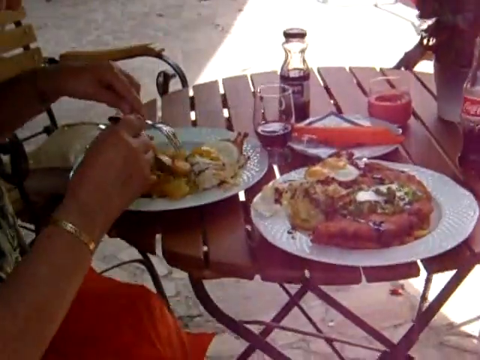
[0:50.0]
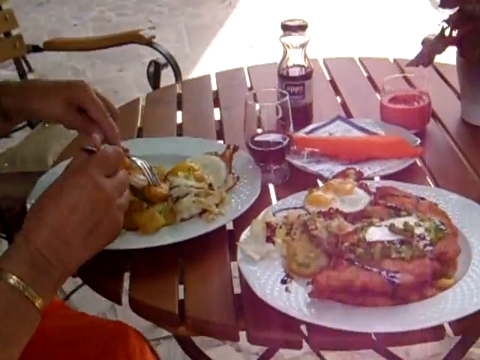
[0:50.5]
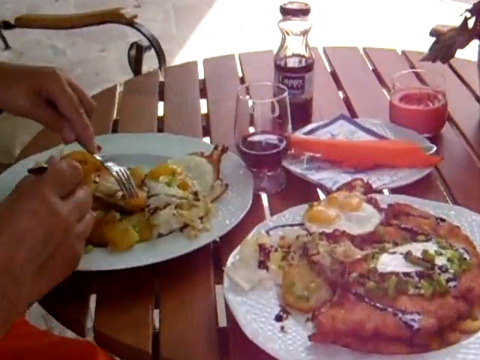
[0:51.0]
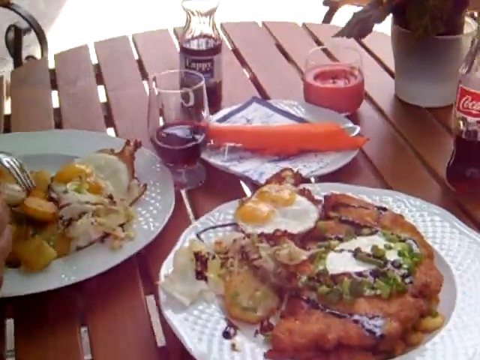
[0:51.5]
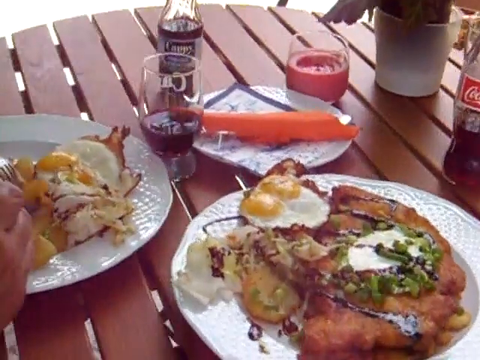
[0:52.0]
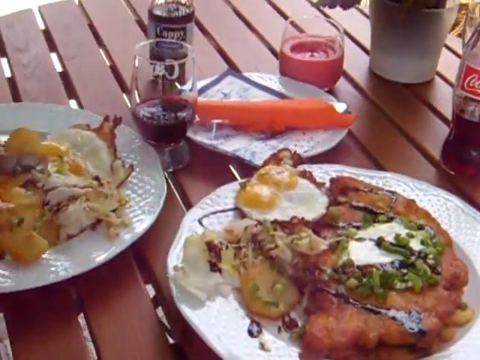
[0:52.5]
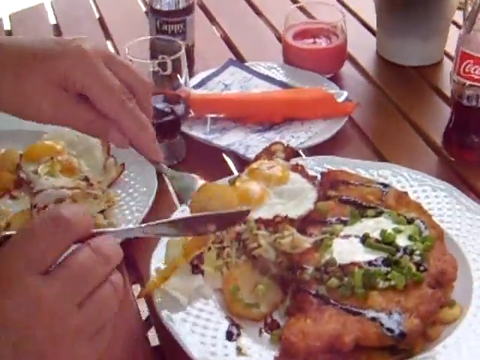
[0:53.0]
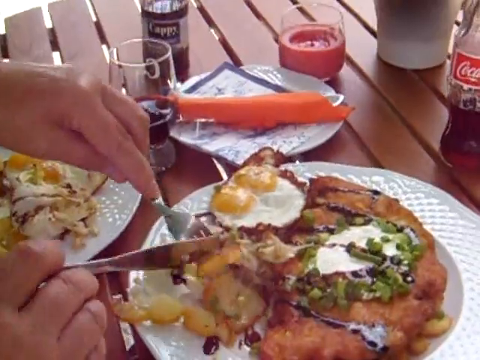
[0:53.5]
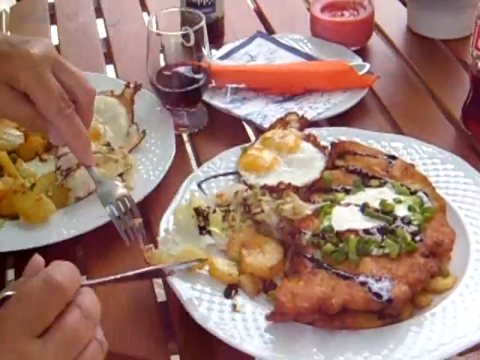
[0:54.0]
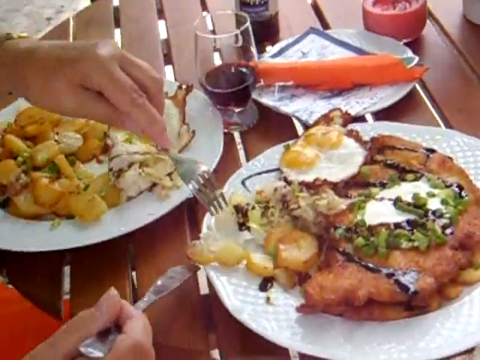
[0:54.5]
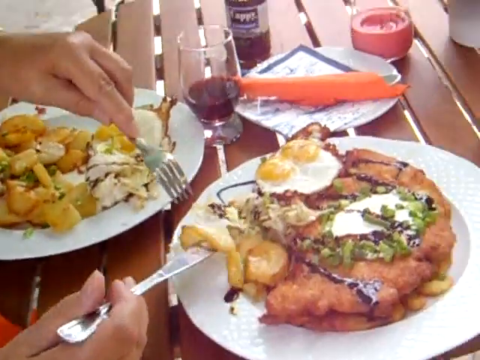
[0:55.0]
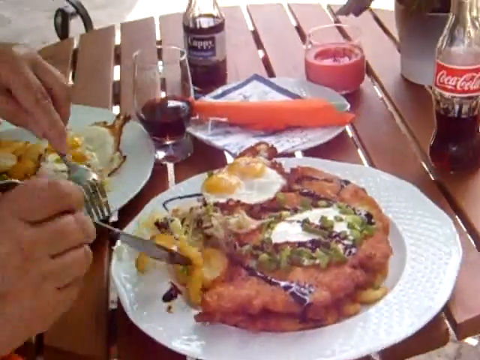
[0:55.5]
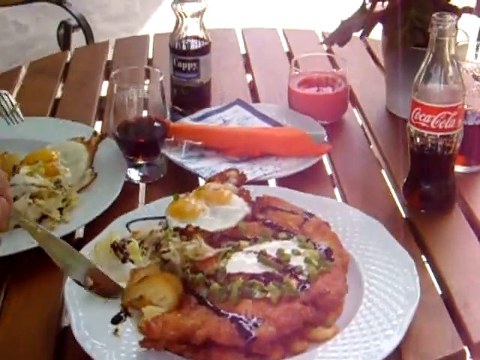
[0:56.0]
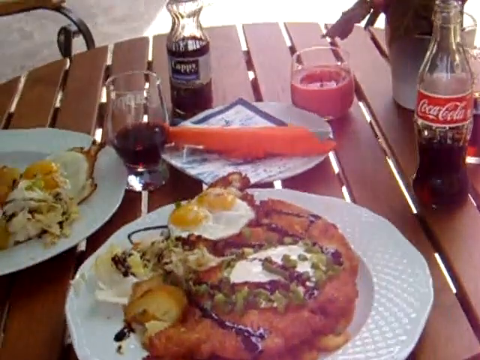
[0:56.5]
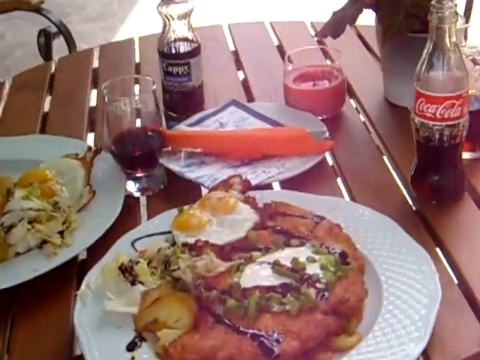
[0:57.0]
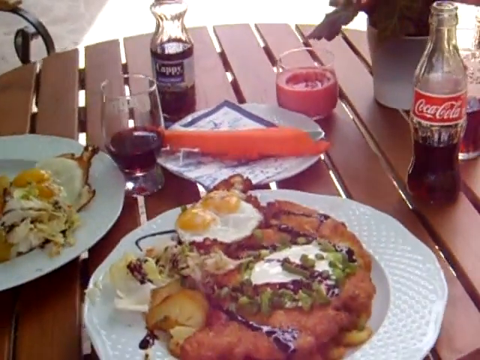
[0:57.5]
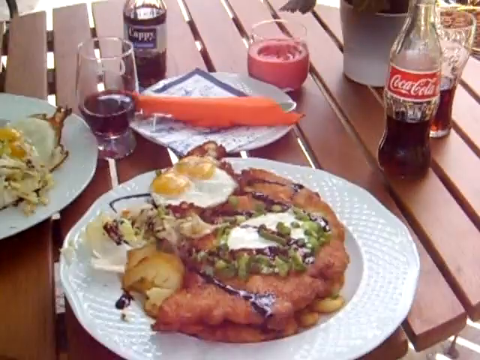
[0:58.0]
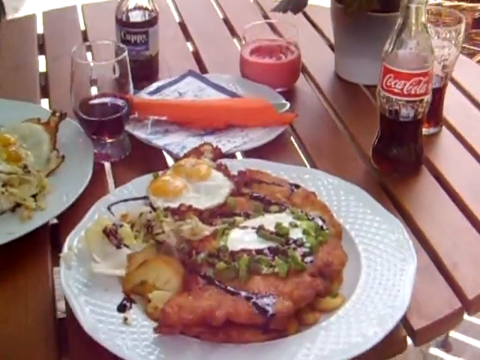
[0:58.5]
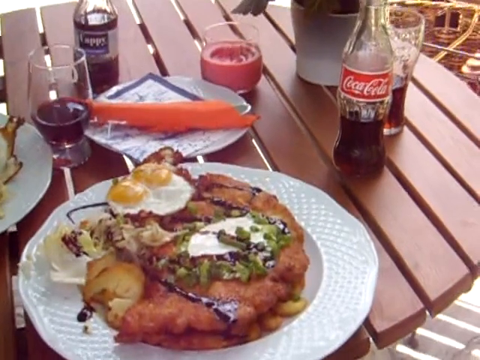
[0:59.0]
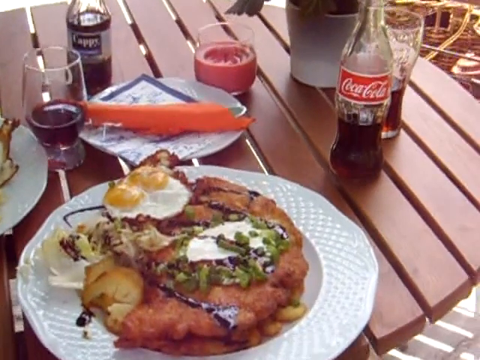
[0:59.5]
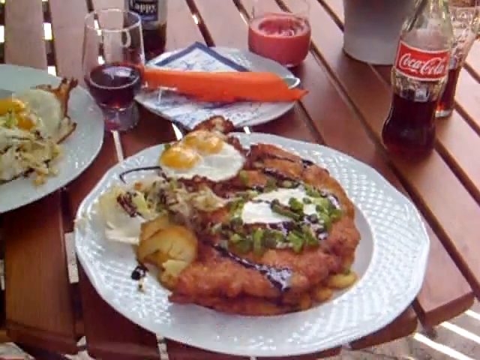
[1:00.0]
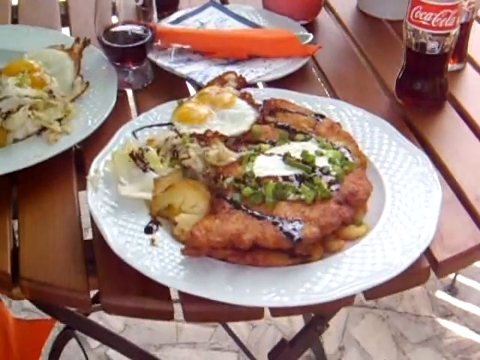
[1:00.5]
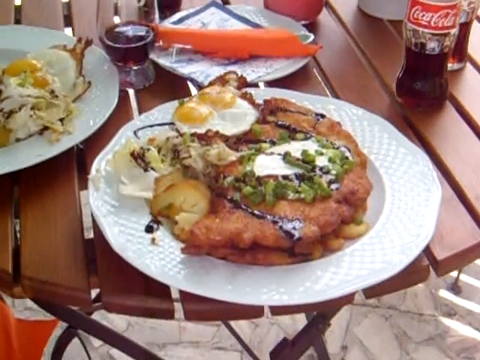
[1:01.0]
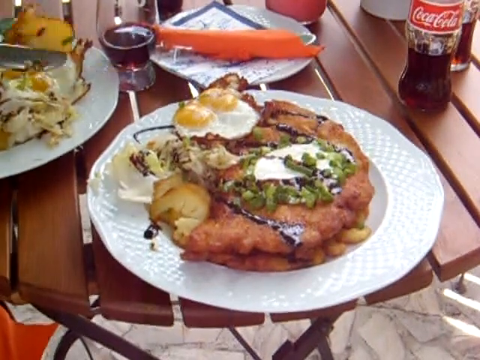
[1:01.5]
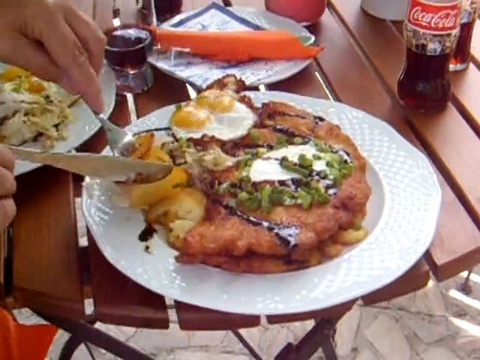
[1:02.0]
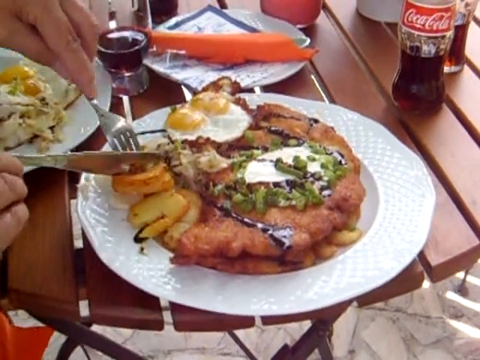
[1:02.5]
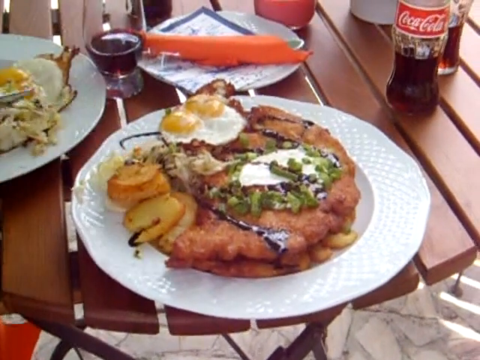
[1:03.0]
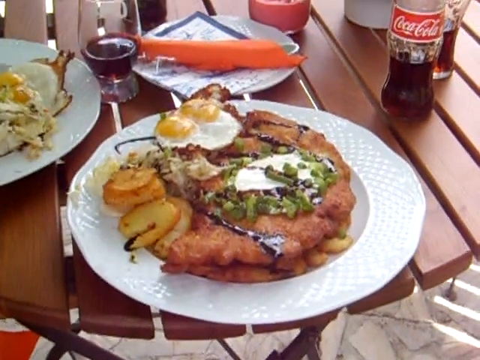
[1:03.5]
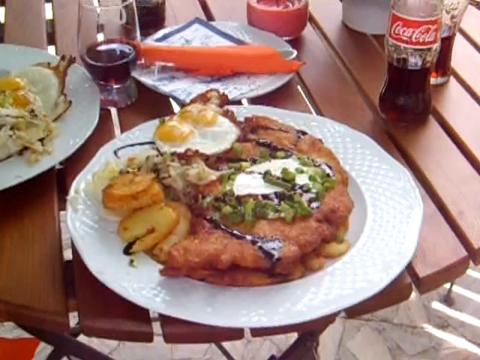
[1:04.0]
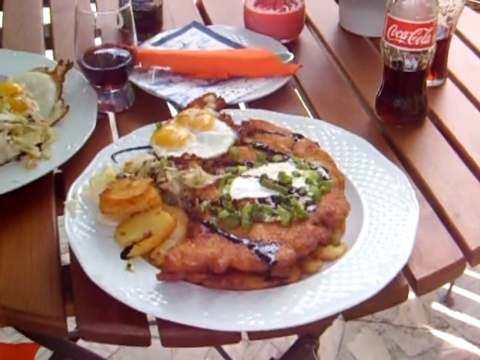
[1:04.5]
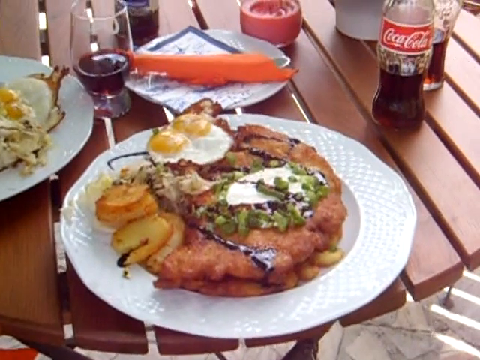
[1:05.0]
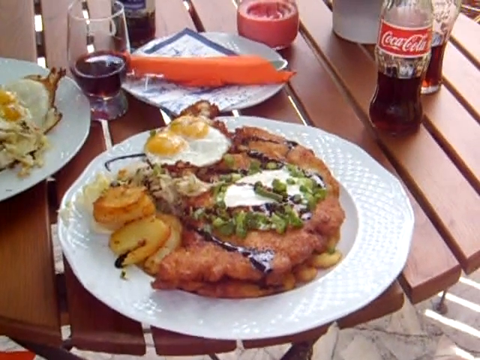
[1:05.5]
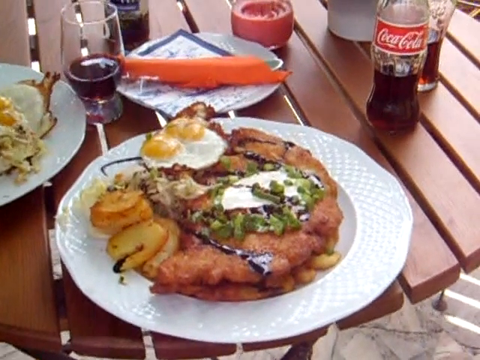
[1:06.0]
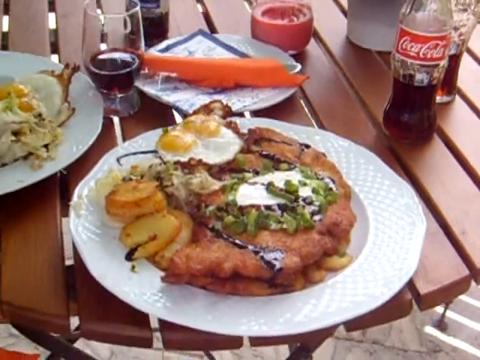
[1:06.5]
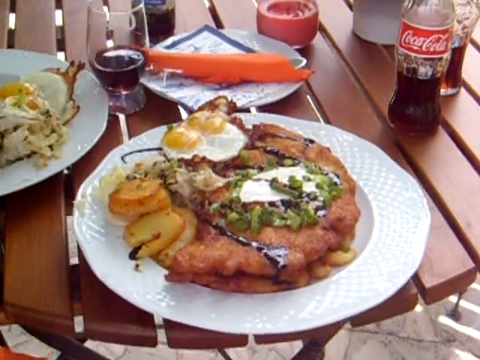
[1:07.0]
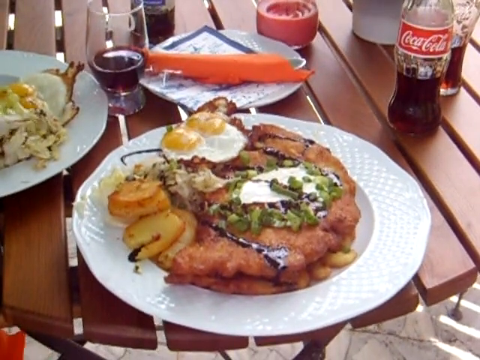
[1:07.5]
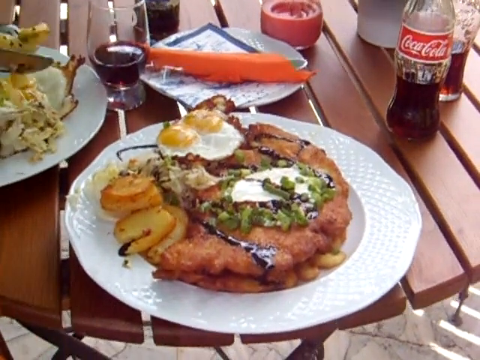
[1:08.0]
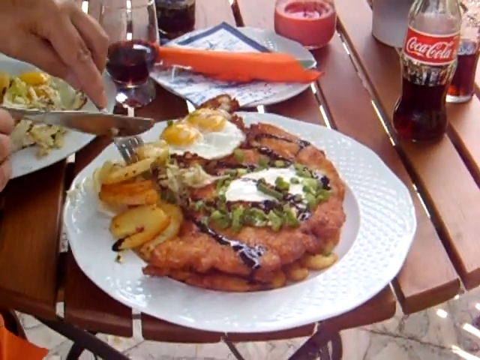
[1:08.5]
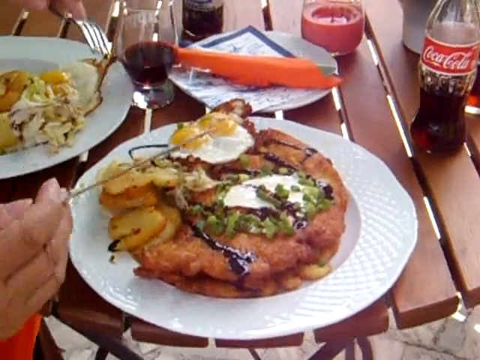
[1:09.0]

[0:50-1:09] Someone is eating the potatoes and eggs and sharing some of the food with the plate on the other side of them. She takes one whole sunny side up egg and puts it over there, then takes some of the potatoes and puts them over there. She wears a gold bracelet on her right hand and a gold watch on her left. In the very middle of the table is silverware on a small white saucer, which rests on top of a white and blue napkin; the silverware is wrapped in an orange-red napkin that conceals it. Right to the right of the saucer is a pink candle that looks like it has already been burned some, but it is not lit.